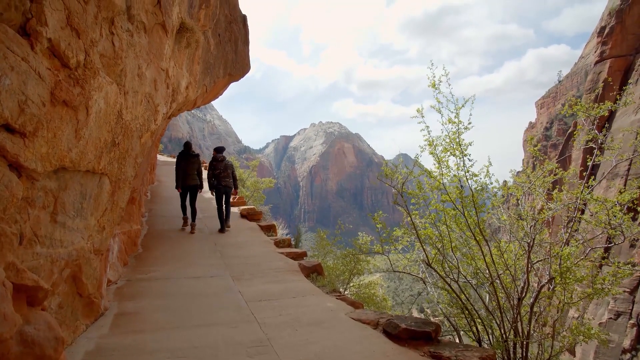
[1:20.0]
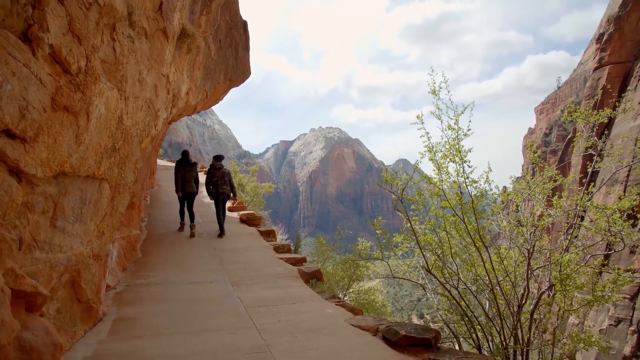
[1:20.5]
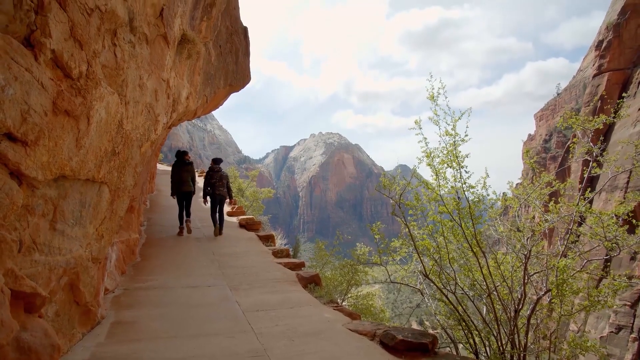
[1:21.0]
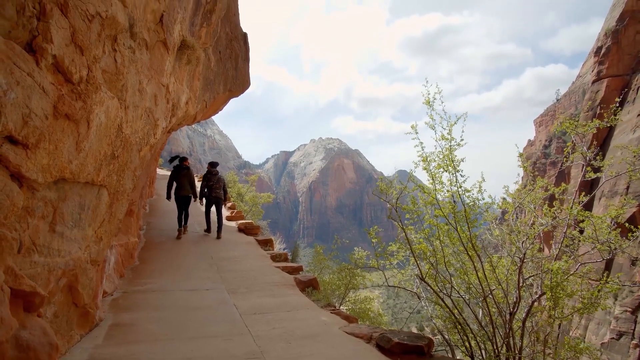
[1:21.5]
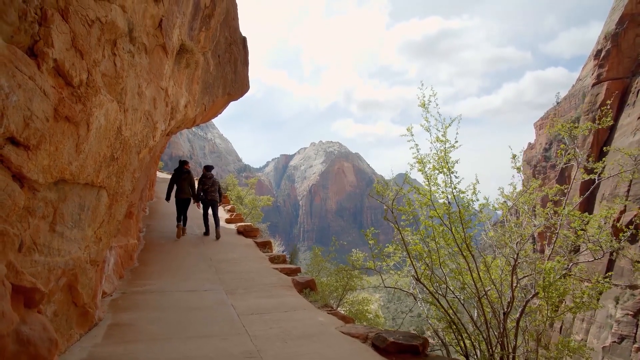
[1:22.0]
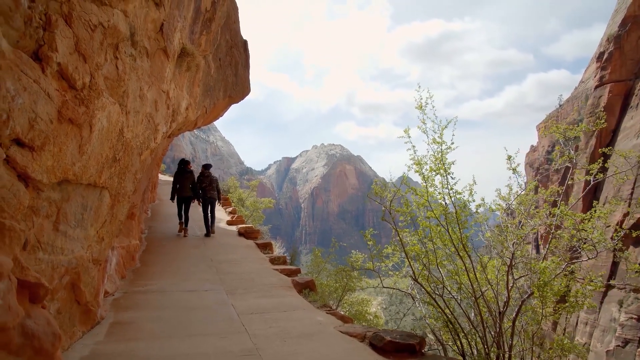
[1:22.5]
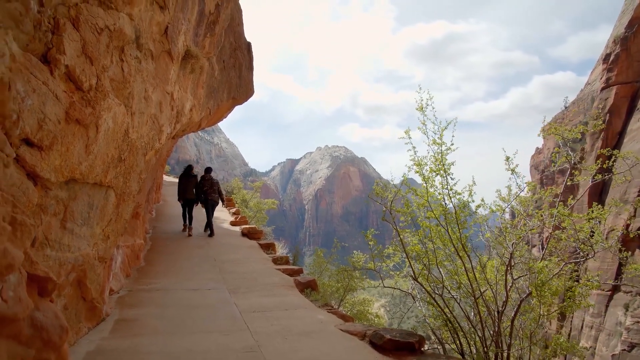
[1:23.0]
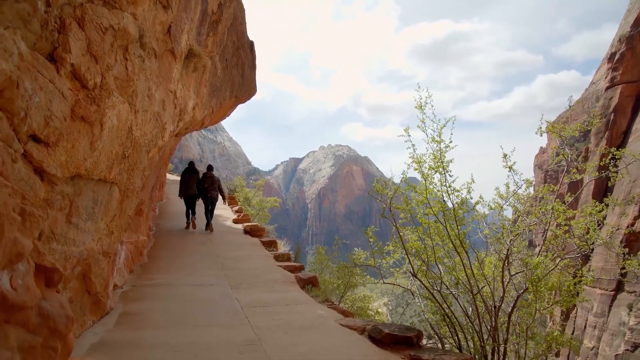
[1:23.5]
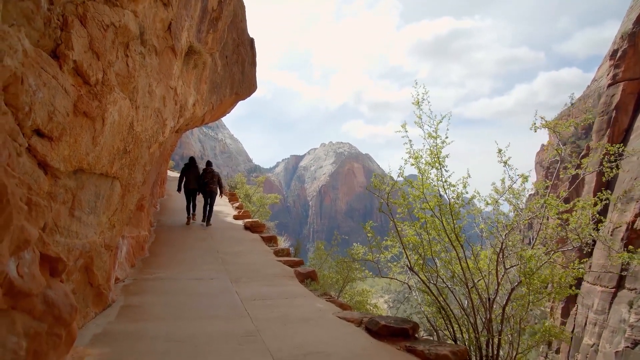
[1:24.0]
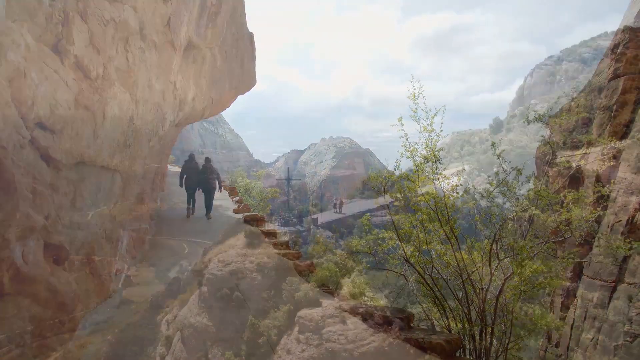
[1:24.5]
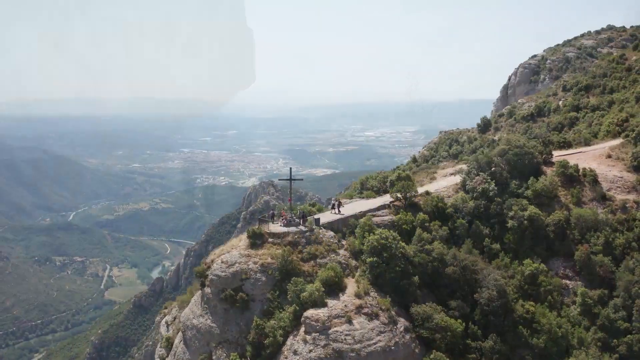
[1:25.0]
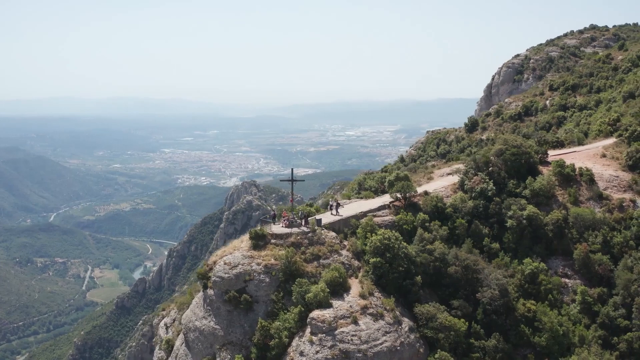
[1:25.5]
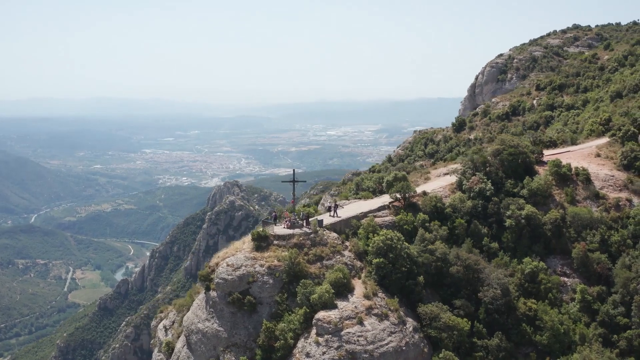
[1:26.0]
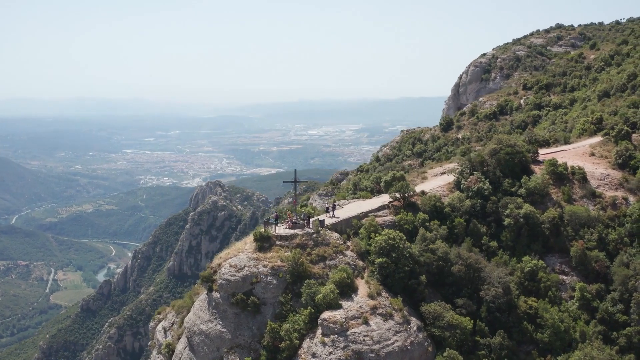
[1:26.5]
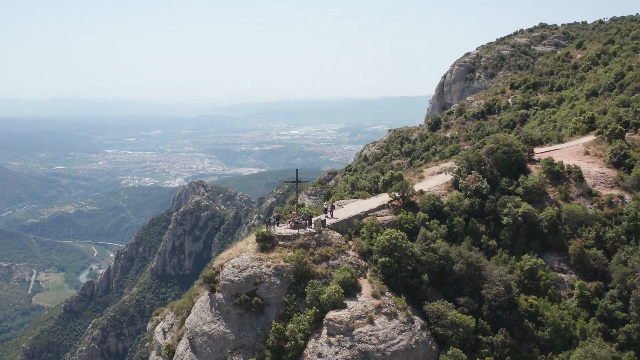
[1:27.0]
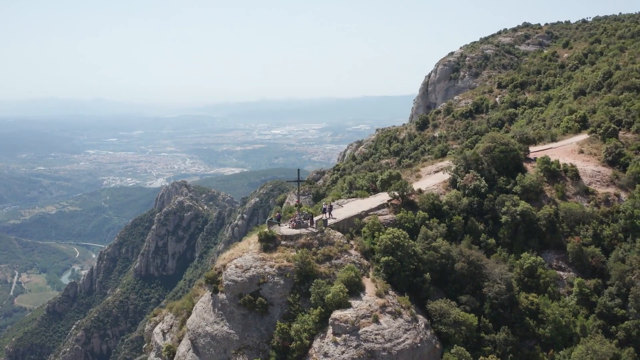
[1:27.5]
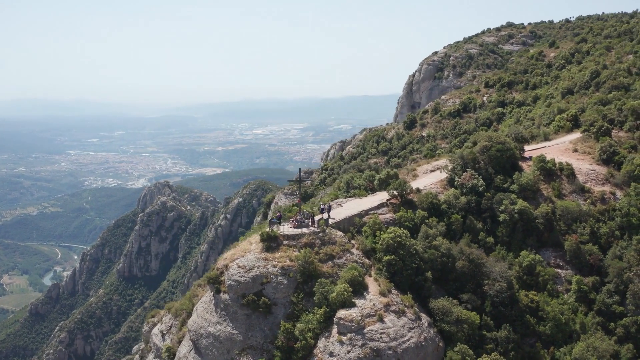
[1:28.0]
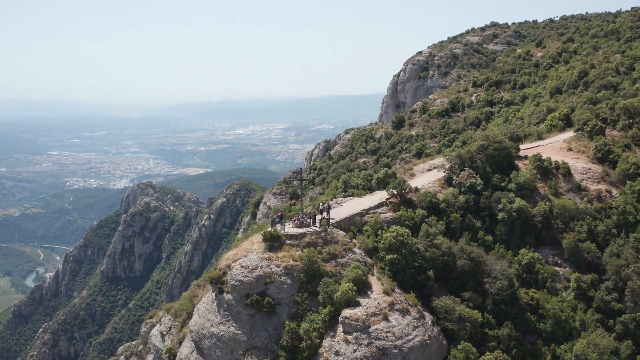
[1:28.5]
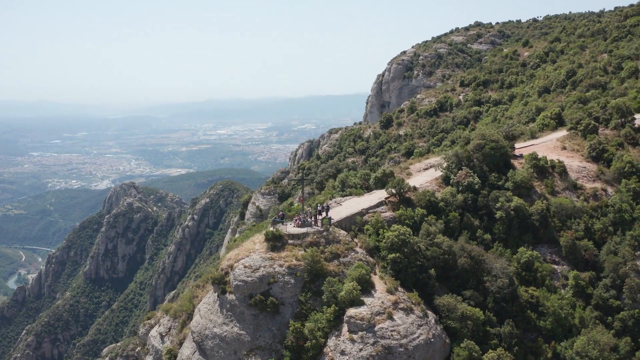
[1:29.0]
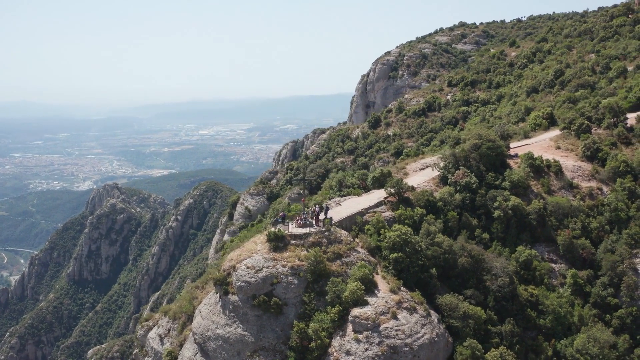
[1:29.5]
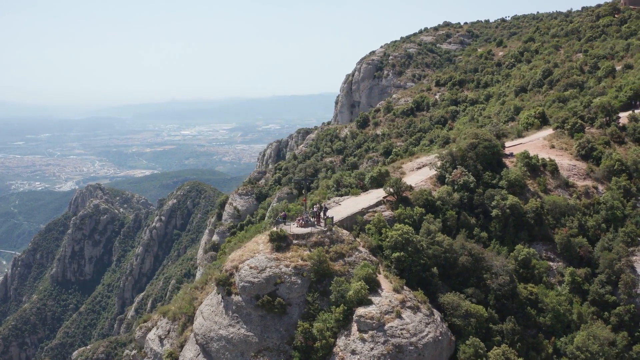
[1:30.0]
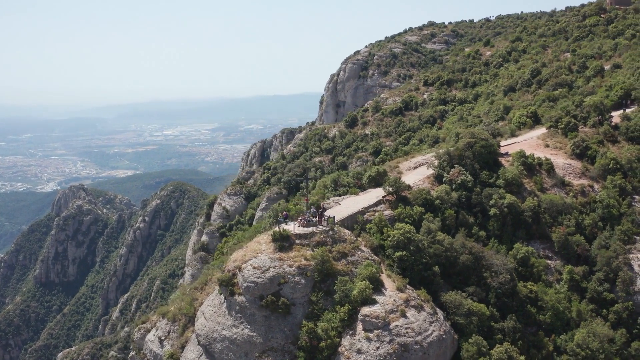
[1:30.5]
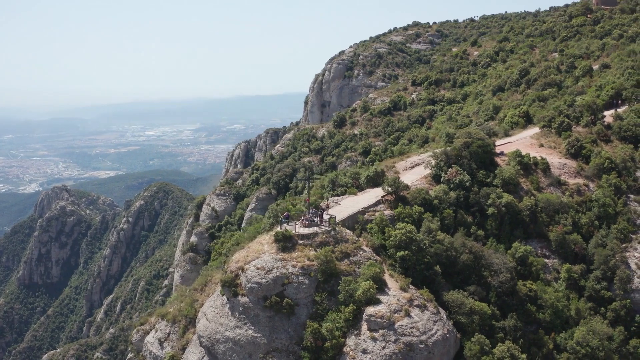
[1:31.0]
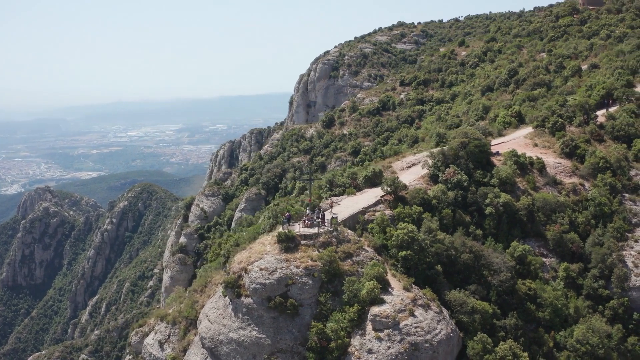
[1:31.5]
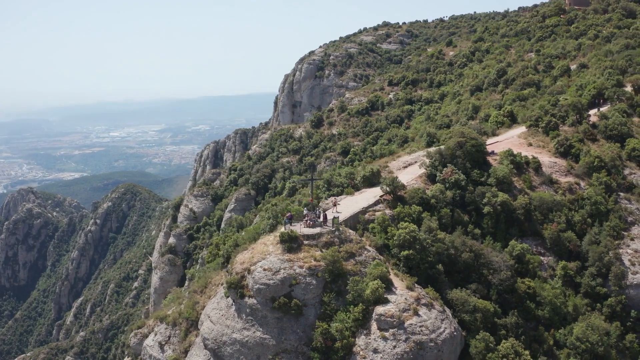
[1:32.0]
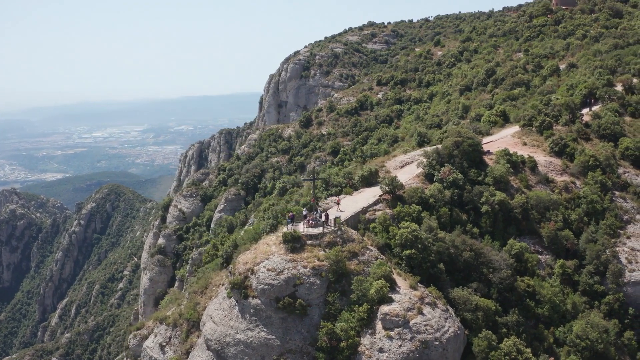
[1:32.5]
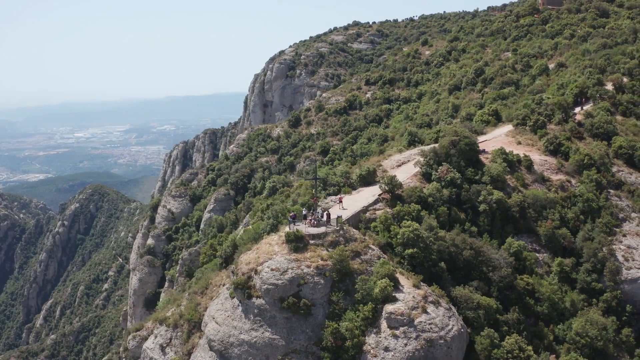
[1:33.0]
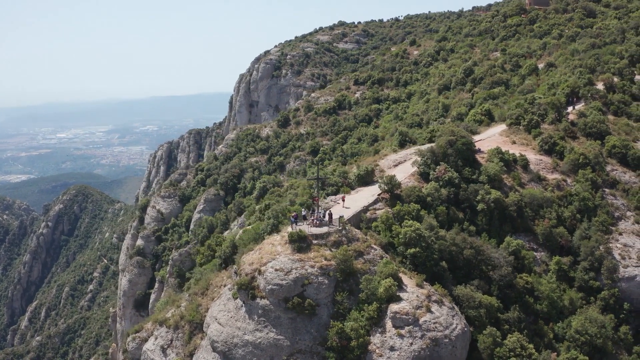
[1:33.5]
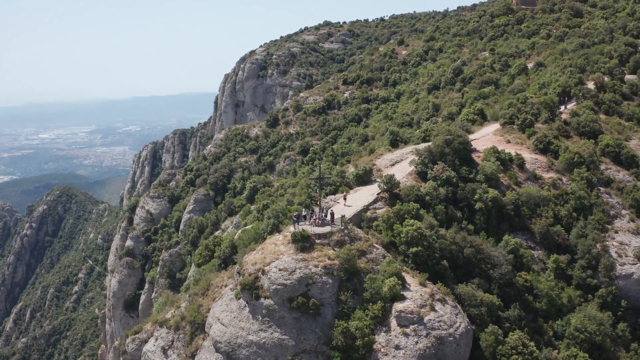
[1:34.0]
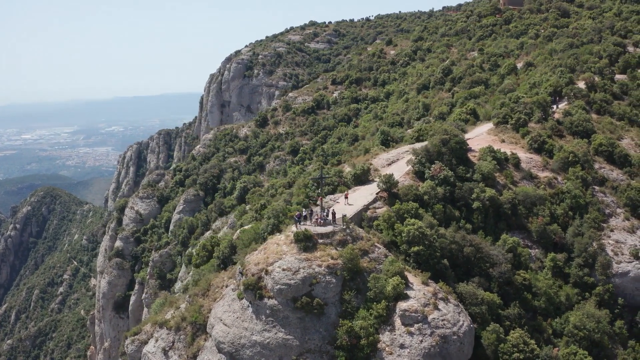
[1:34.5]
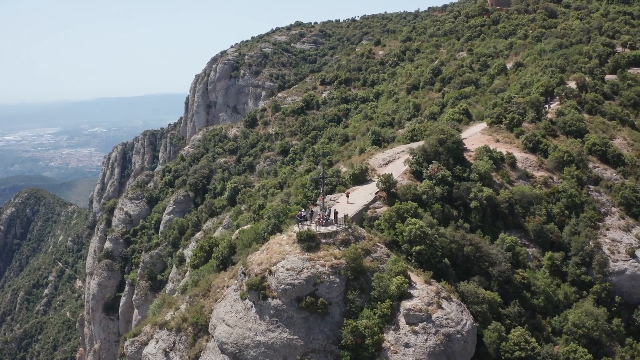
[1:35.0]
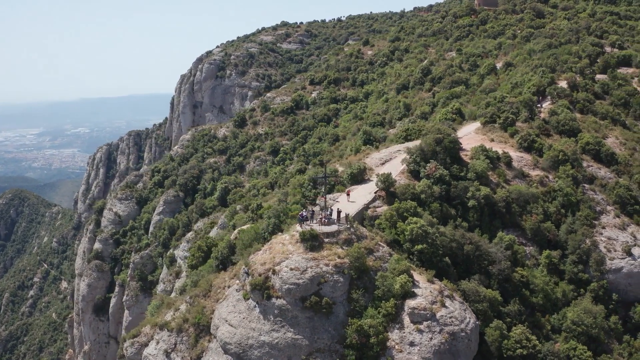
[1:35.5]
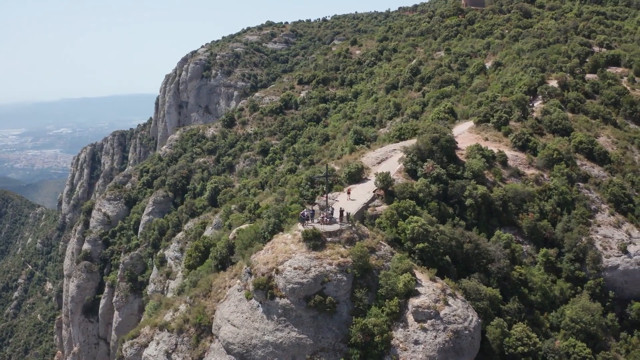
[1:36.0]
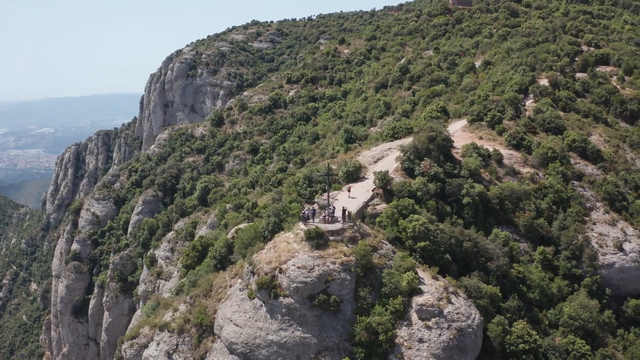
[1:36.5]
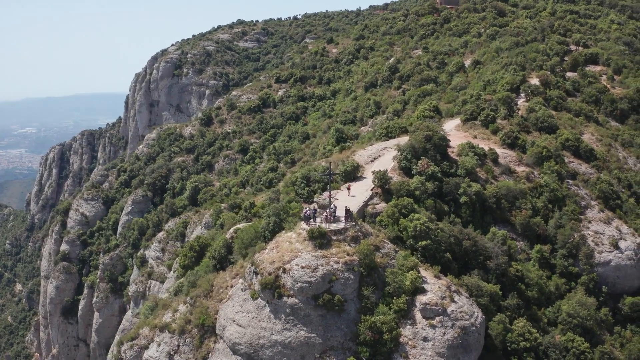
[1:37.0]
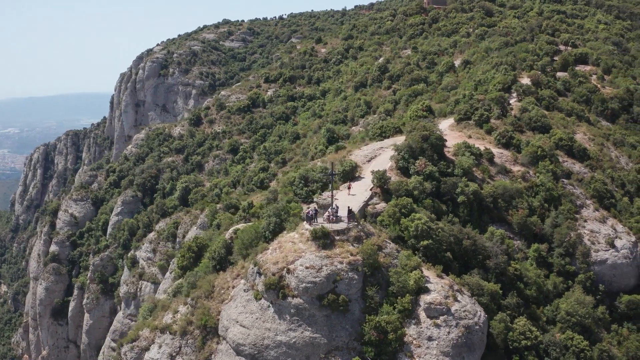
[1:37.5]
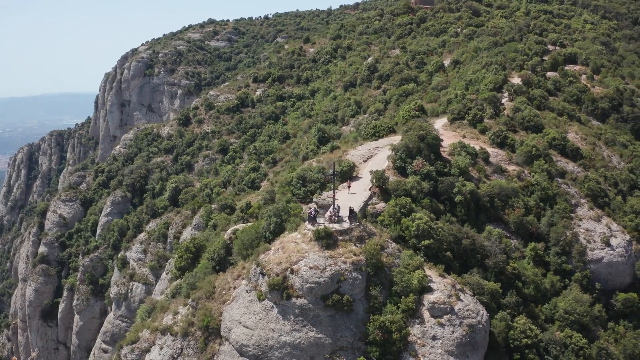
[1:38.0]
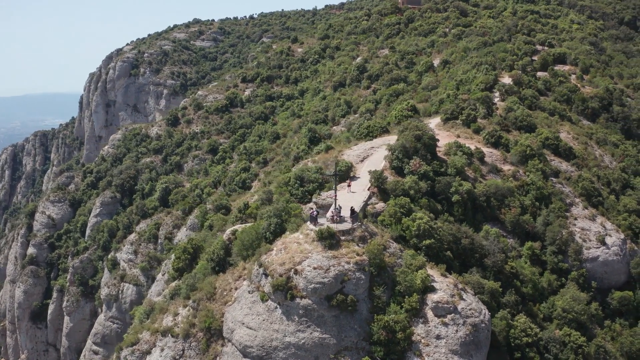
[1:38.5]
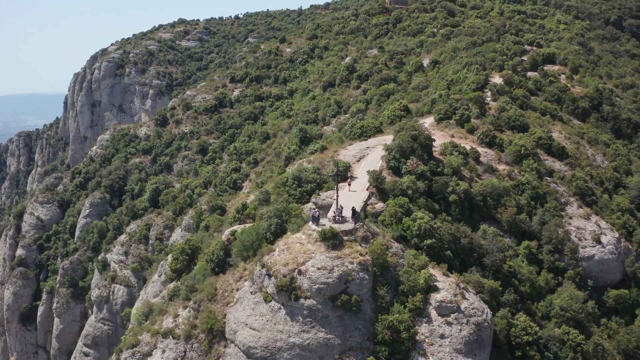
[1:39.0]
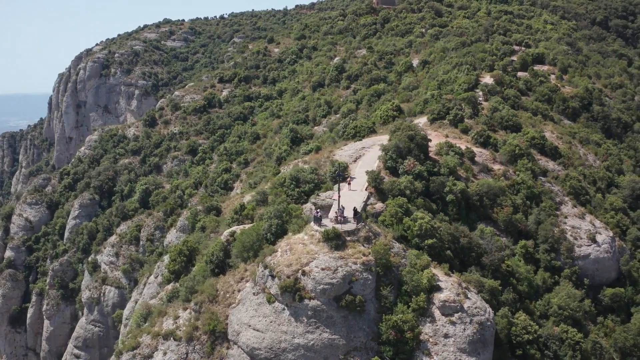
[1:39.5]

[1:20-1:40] The two people hike on the hilly, rocky mountain, wearing coats, black pants and hiking shoes. Trees with short leaves are there, suggesting a possibly semi-arid area. The path they use is well maintained. An aerial view then shows the hilly mountain with a cross at the top where people are gathering. Some people are already there, two others have arrived, and one at the back is moving away from the hill. The two who arrived may be the lady and gentleman seen hiking.